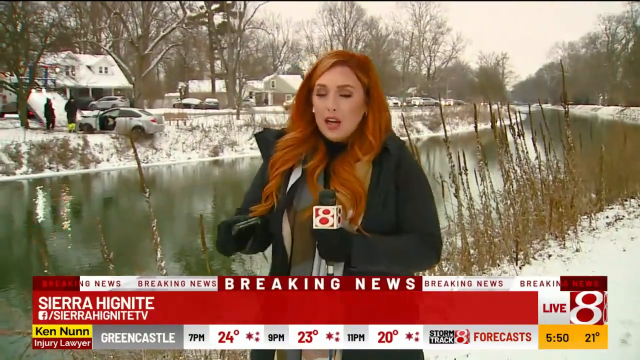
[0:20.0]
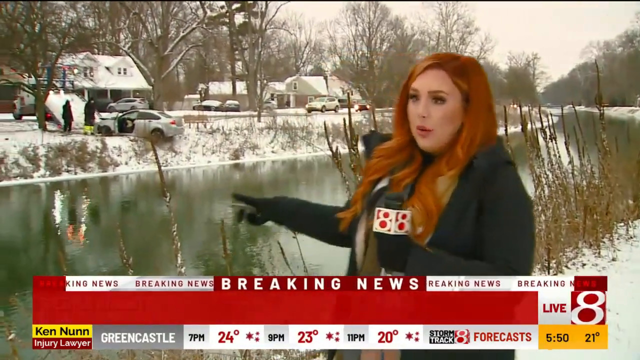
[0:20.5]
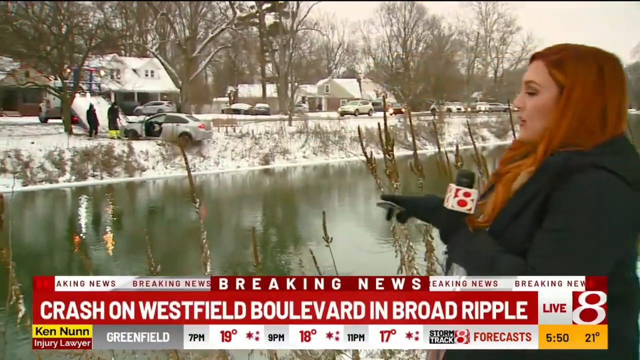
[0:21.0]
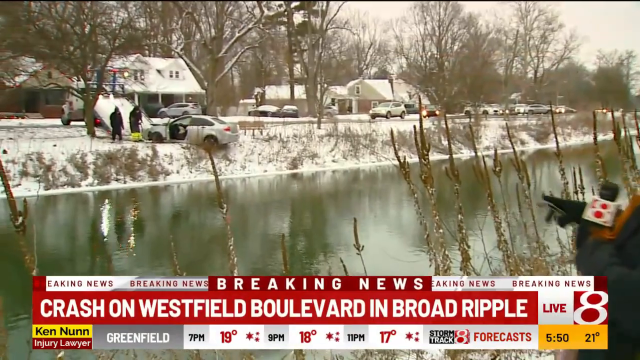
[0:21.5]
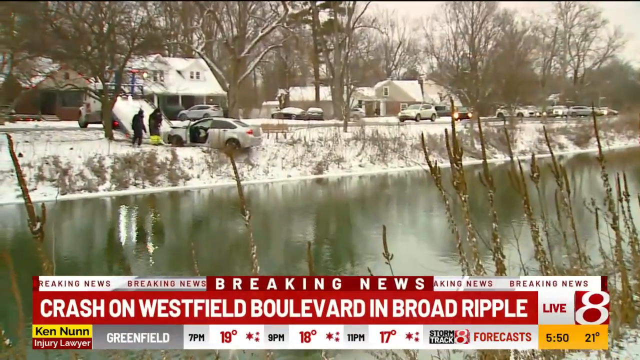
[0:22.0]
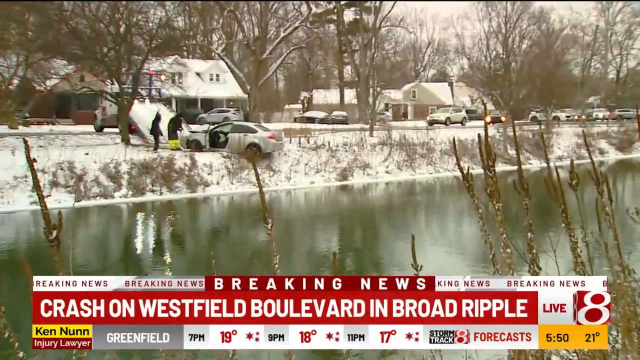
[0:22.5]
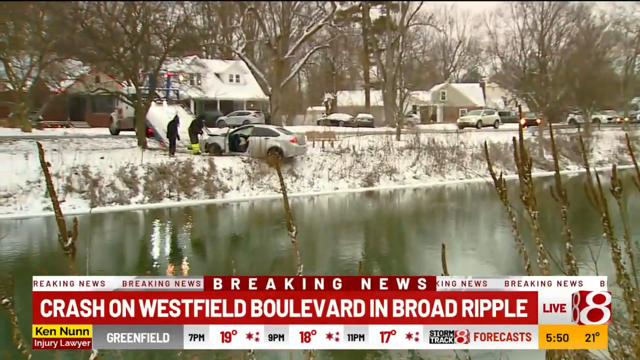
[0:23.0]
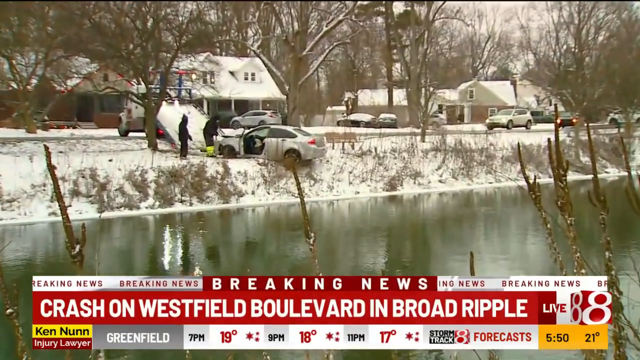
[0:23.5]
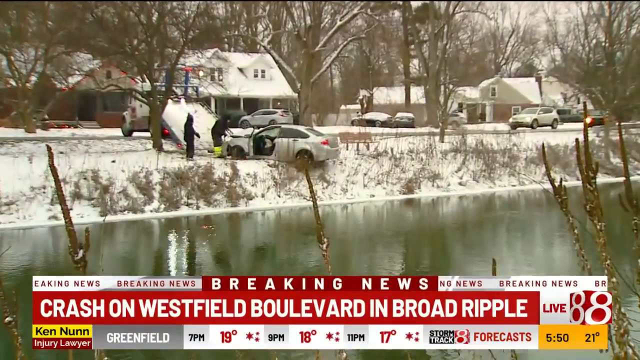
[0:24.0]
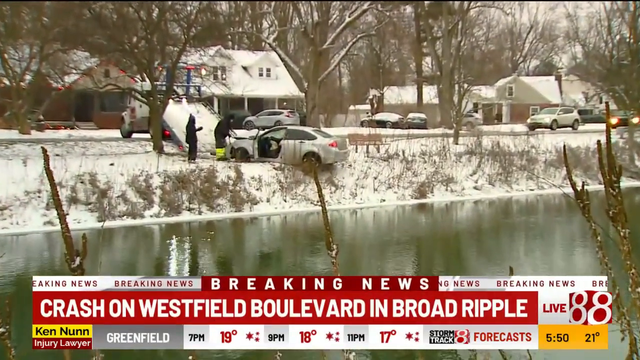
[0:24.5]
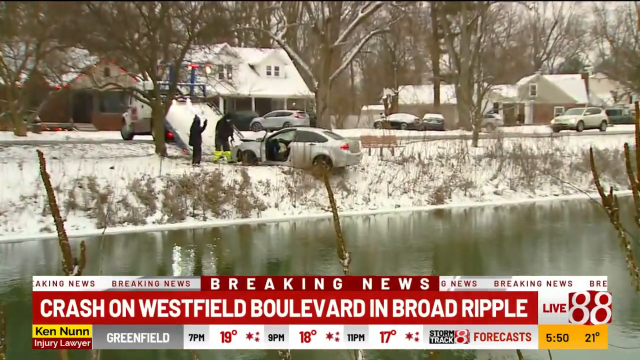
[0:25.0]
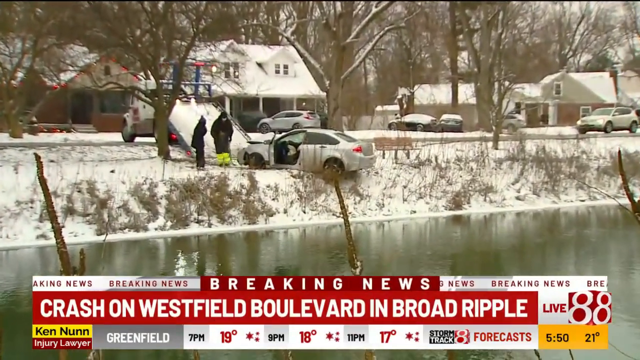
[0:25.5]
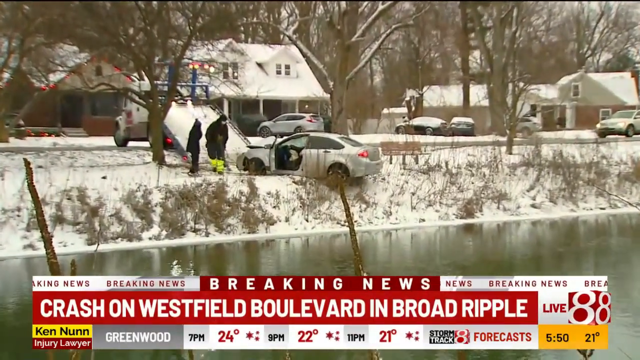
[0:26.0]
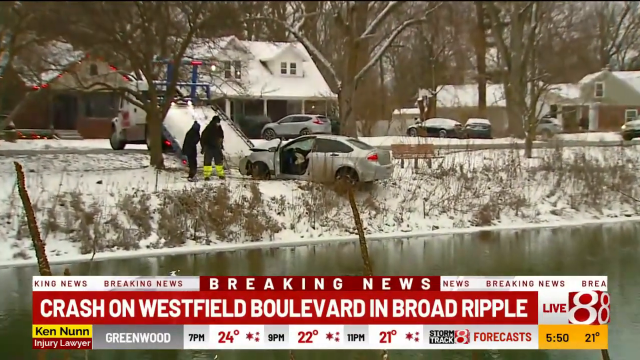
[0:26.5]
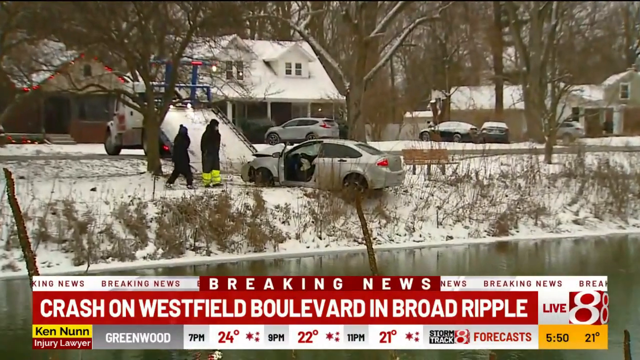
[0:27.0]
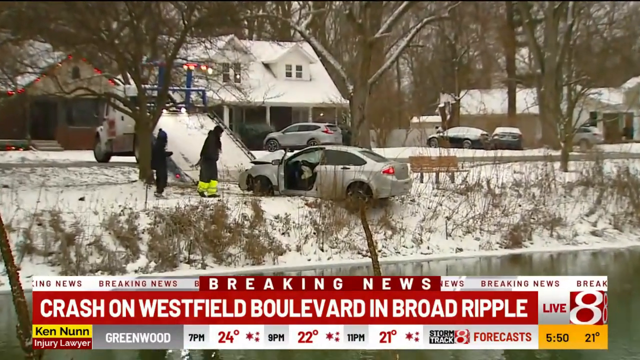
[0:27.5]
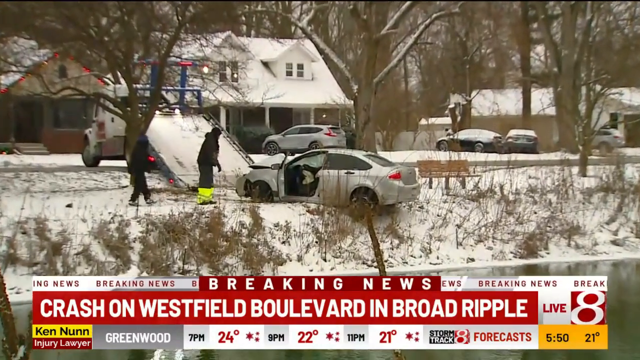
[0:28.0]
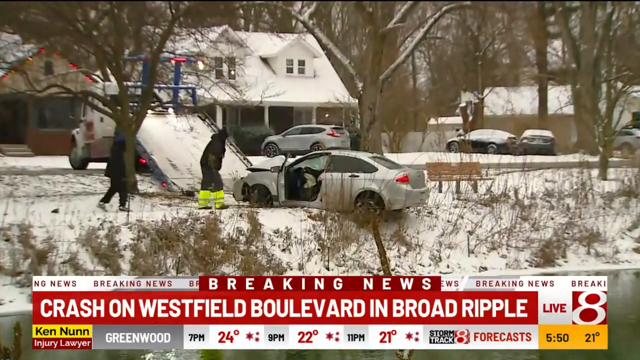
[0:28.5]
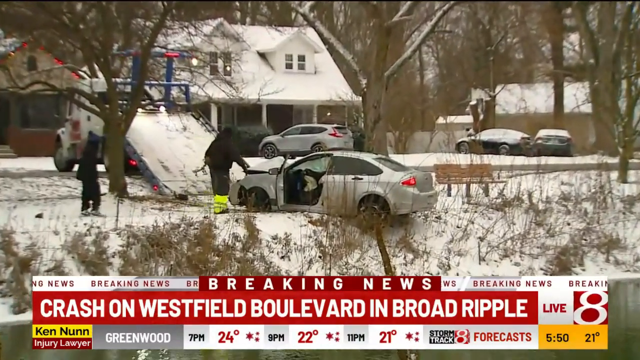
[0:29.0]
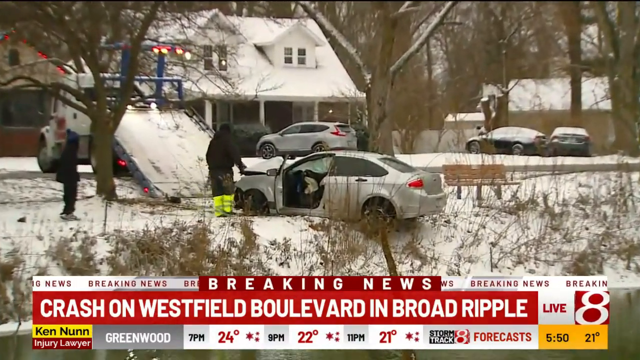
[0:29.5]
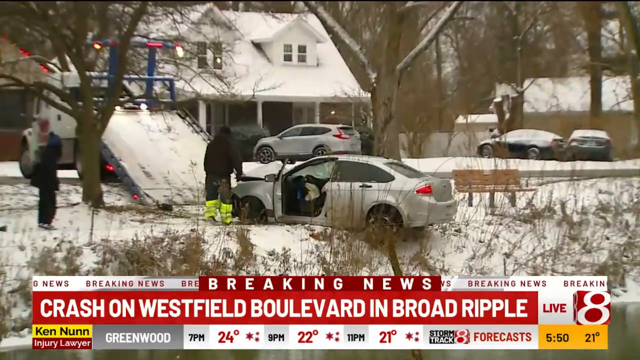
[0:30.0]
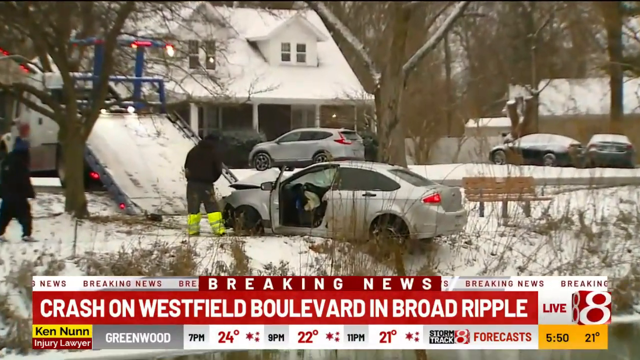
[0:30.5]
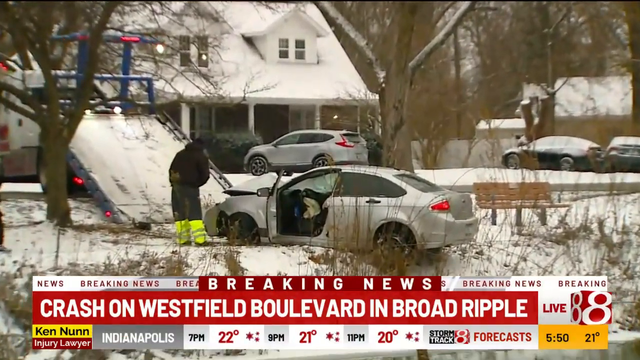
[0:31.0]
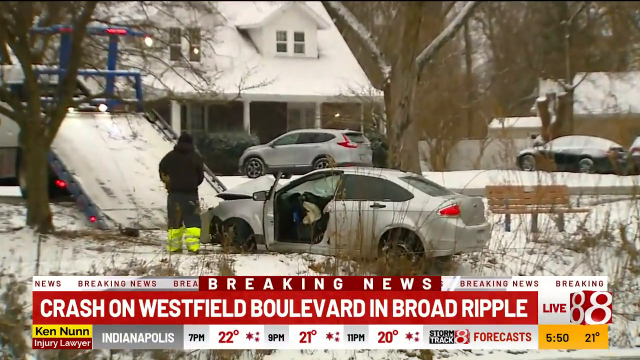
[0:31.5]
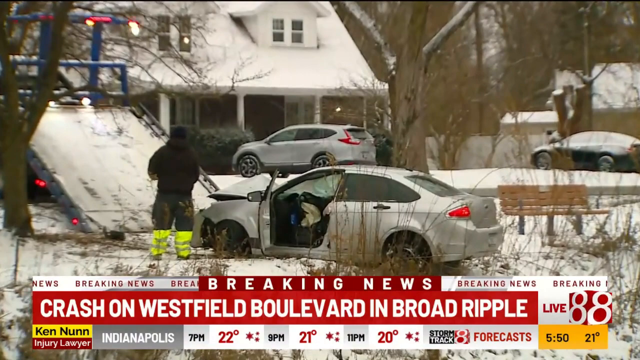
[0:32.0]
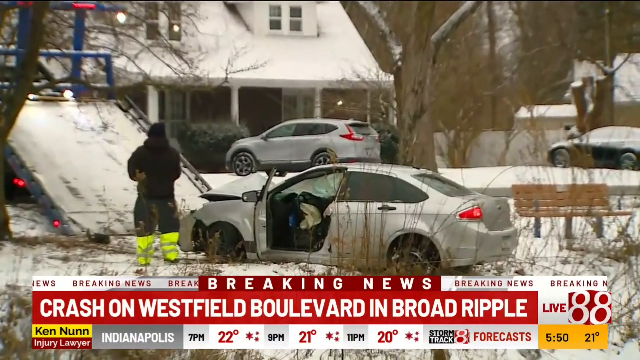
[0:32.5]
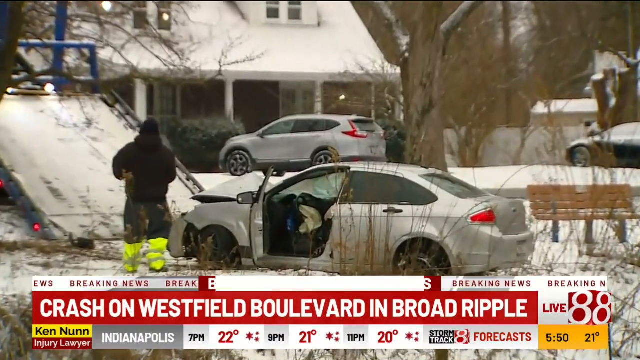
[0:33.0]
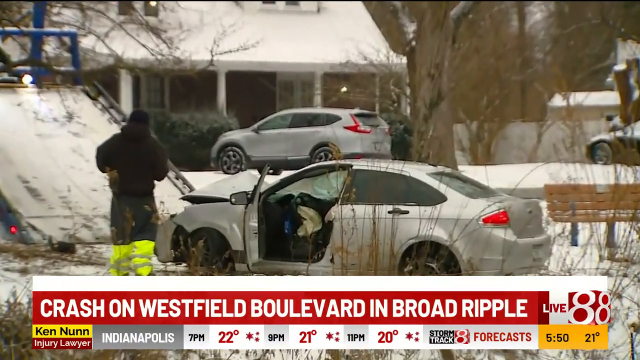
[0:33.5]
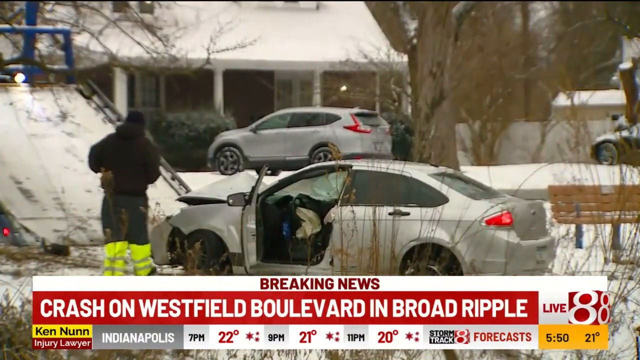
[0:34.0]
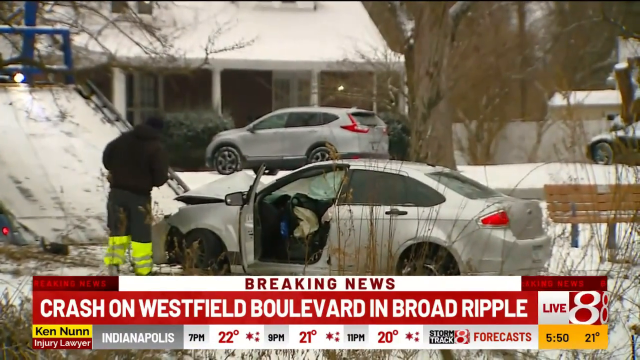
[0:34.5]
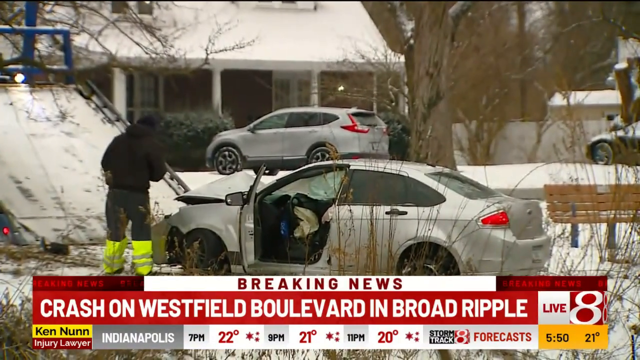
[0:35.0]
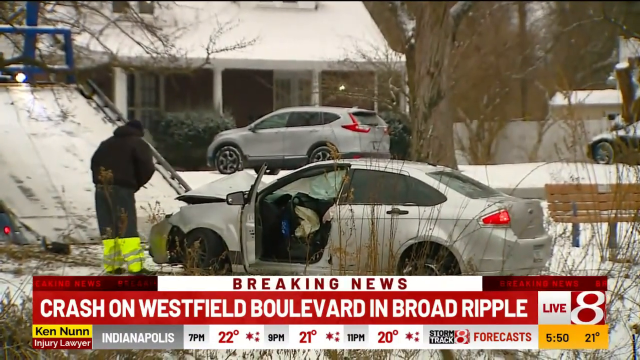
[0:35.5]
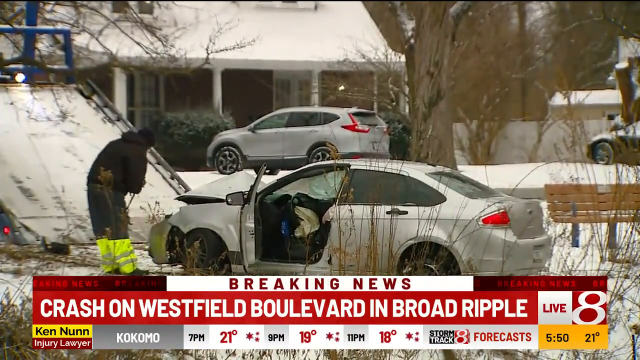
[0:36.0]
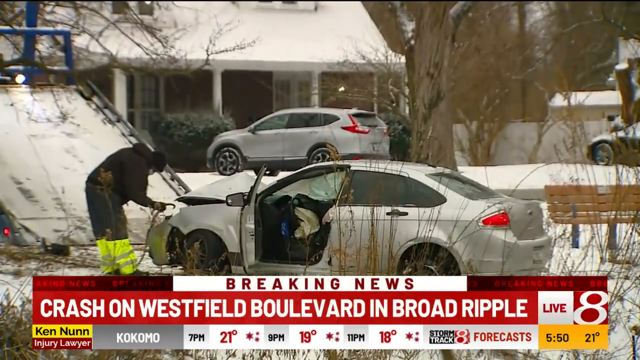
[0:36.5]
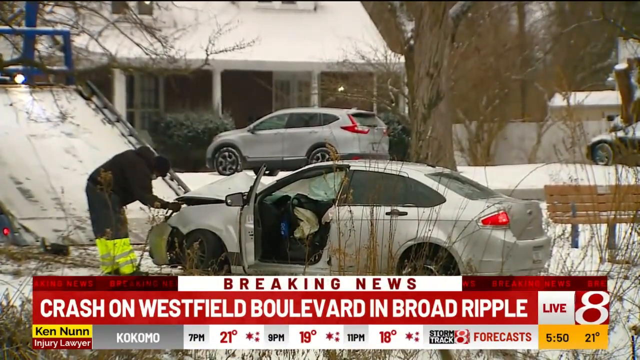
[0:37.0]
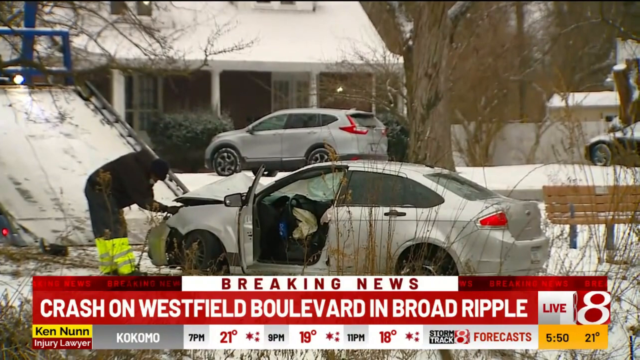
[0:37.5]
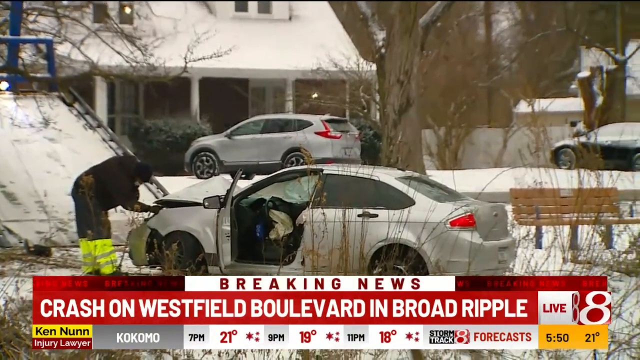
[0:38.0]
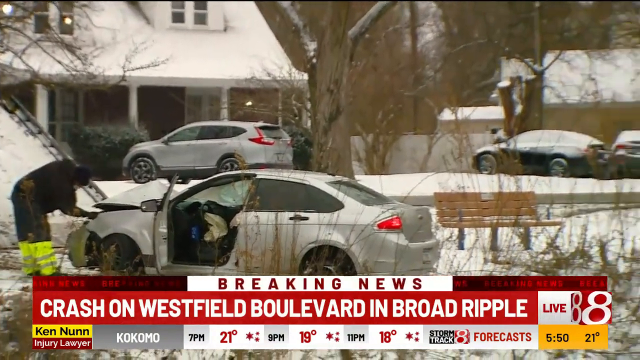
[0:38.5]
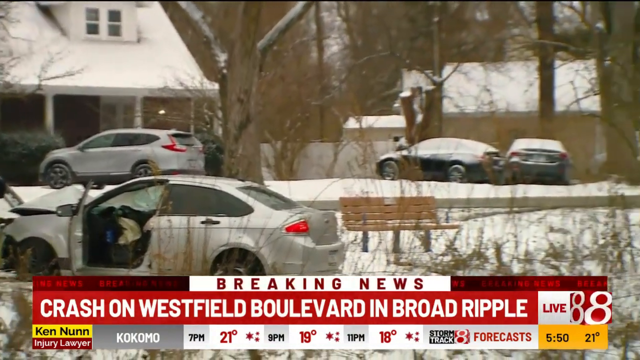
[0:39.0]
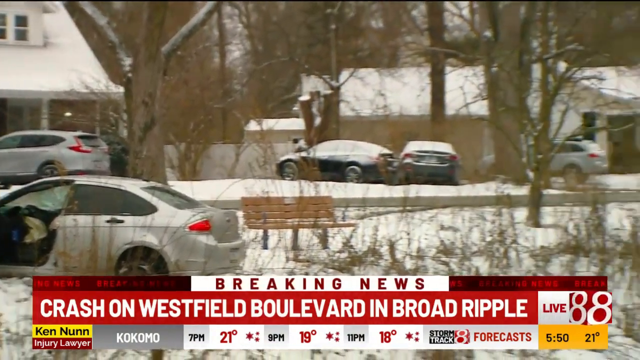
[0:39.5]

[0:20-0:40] A female weather reporter stands beside a river with snow on the ground and a microphone in front of her. Her name is Sierra. She points towards houses covered in snow. A car that looks like it has come off the road is very close to the edge of the river, in a precarious position, and people are working with it. The camera zooms in on the car, which hangs off the edge of the riverbank, teetering on the edge. A recovery vehicle is there, trying to haul the car away from the river and onto the recovery vehicle. A breaking news headline on screen reports a crash on Westfield Boulevard in Broad Ripple, from Live News Channel 8.